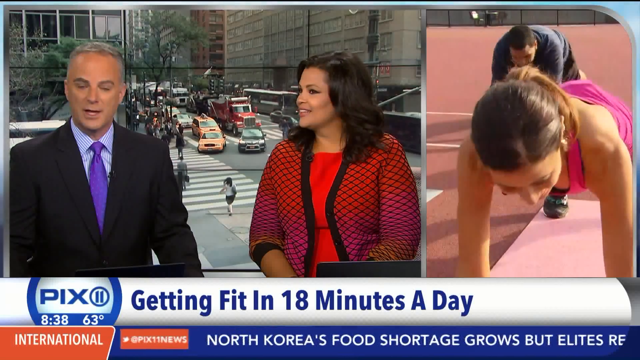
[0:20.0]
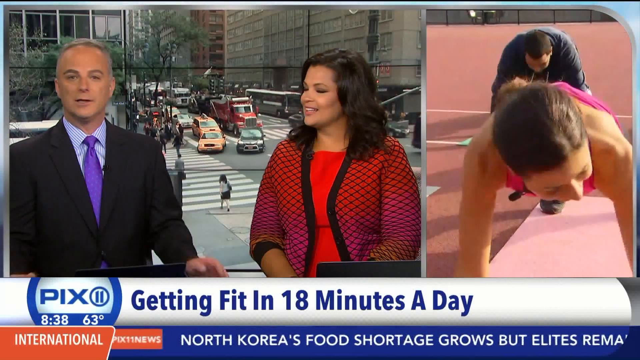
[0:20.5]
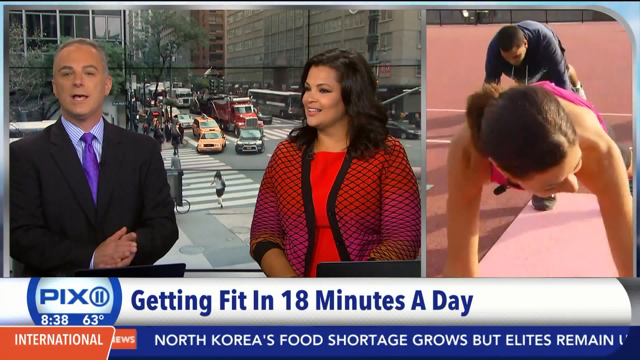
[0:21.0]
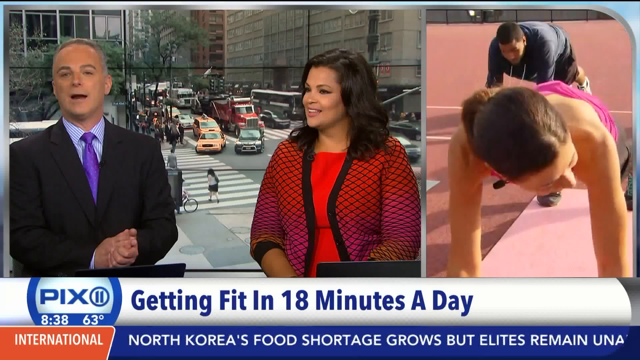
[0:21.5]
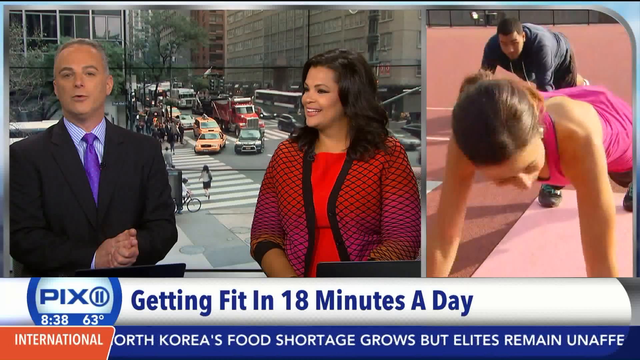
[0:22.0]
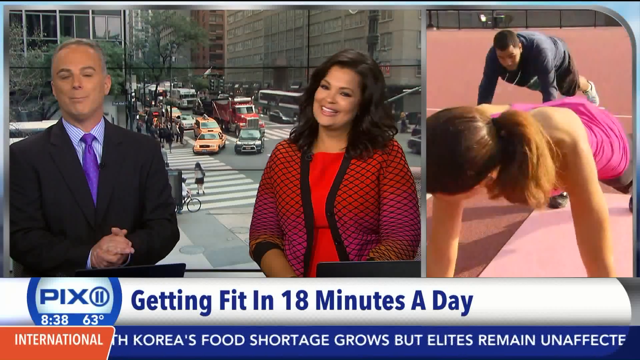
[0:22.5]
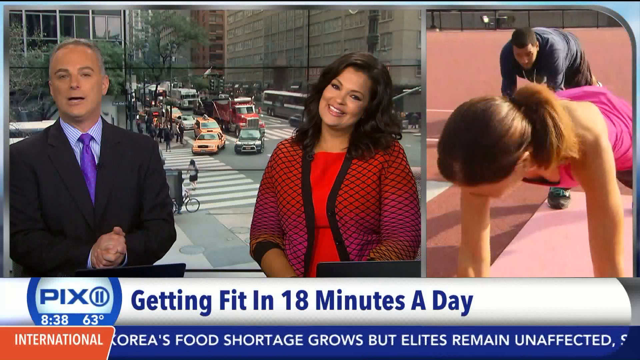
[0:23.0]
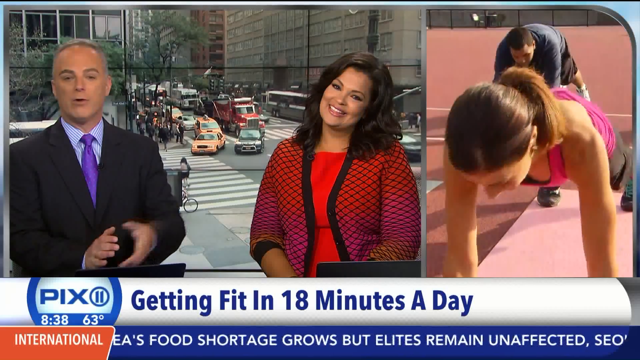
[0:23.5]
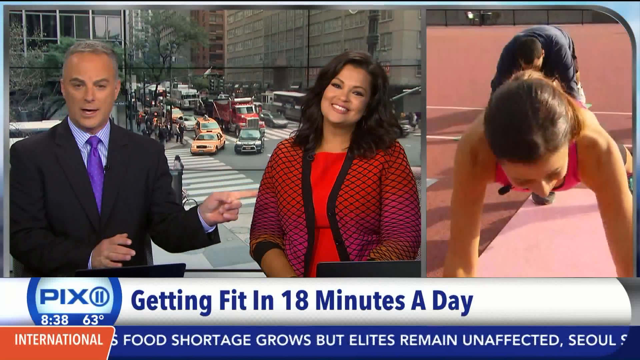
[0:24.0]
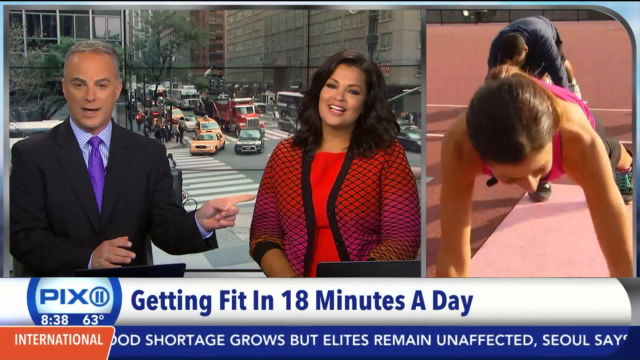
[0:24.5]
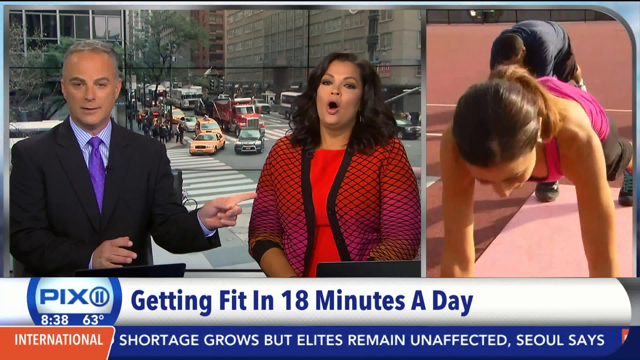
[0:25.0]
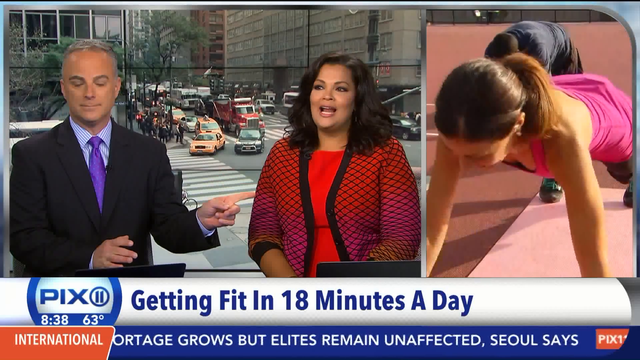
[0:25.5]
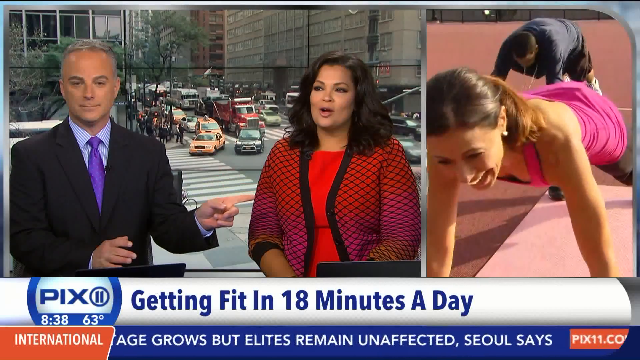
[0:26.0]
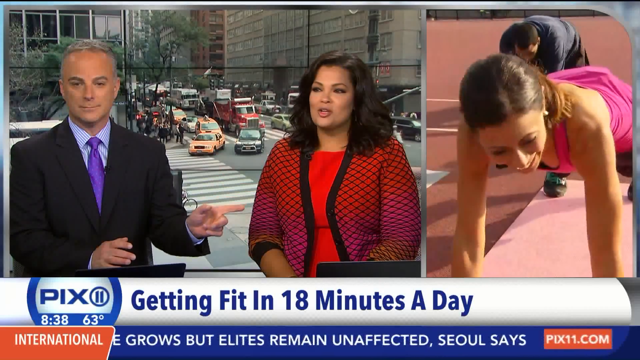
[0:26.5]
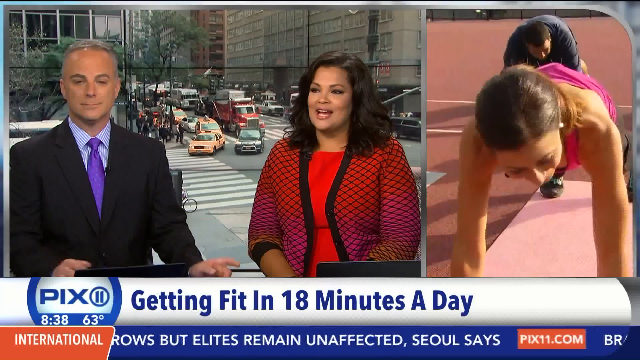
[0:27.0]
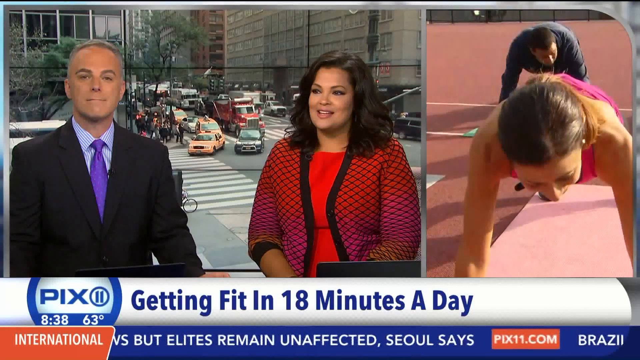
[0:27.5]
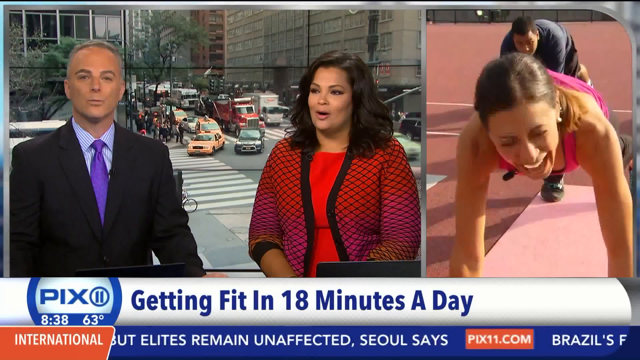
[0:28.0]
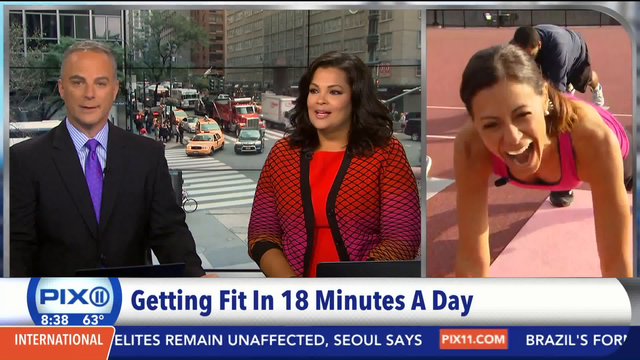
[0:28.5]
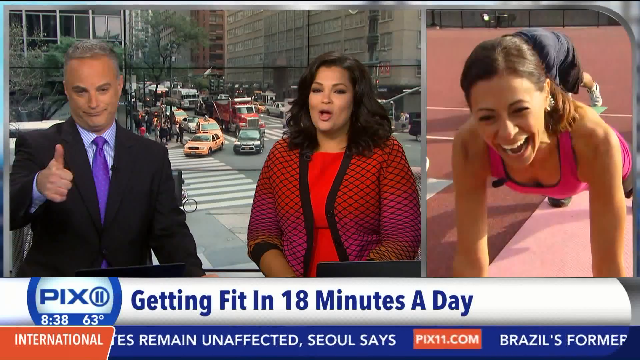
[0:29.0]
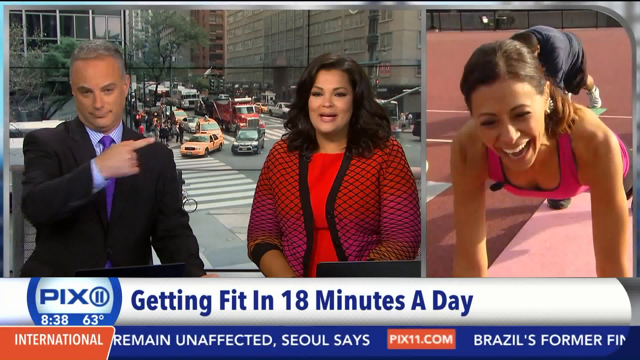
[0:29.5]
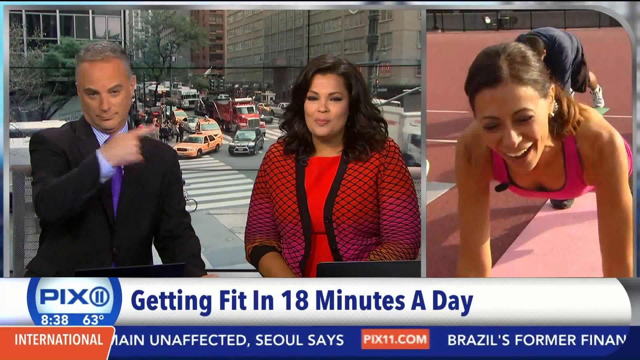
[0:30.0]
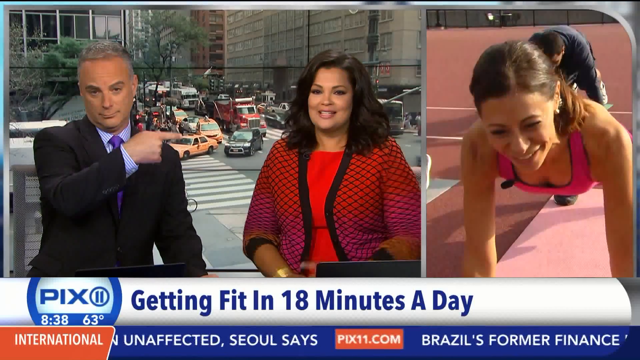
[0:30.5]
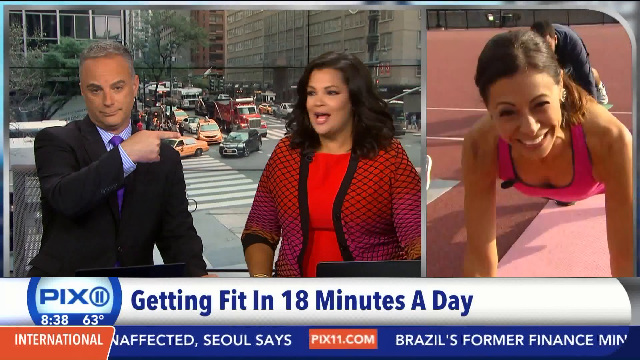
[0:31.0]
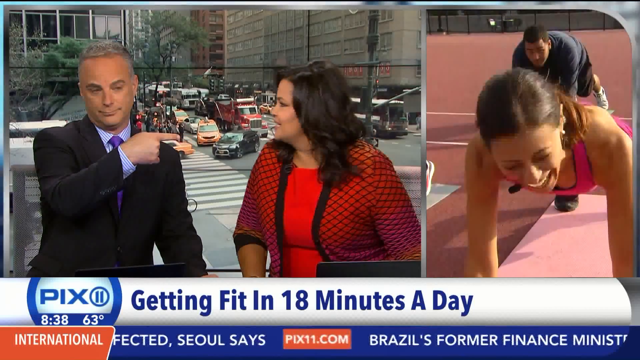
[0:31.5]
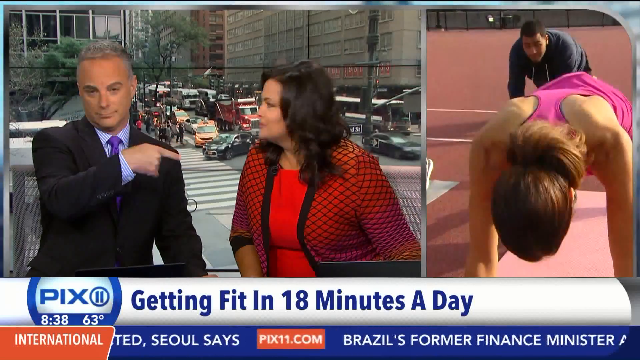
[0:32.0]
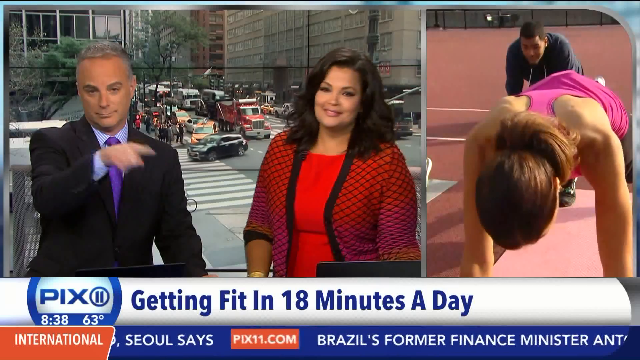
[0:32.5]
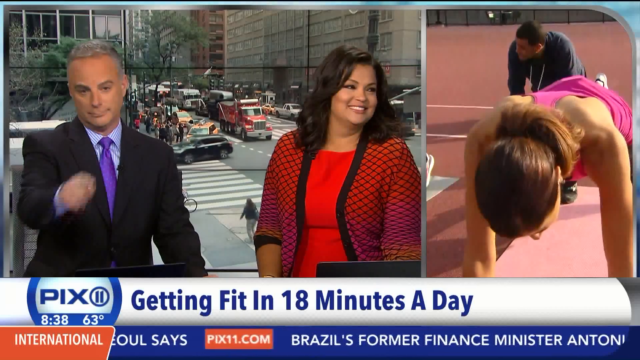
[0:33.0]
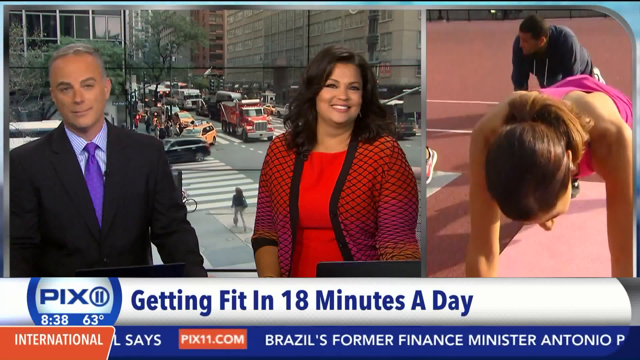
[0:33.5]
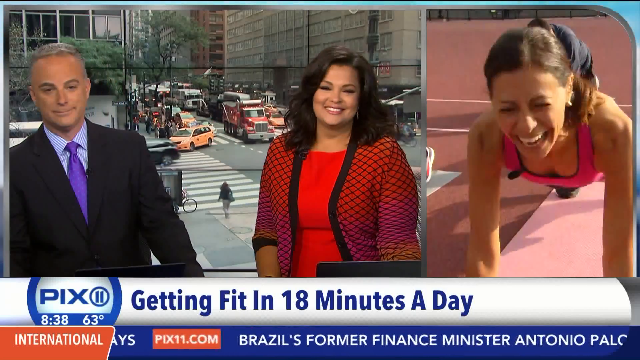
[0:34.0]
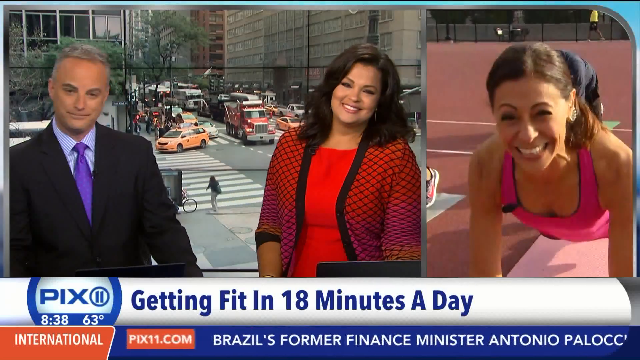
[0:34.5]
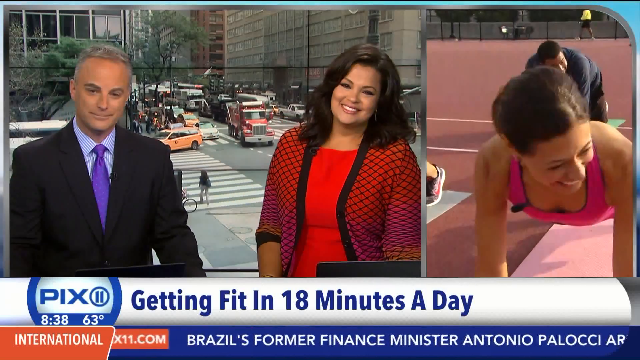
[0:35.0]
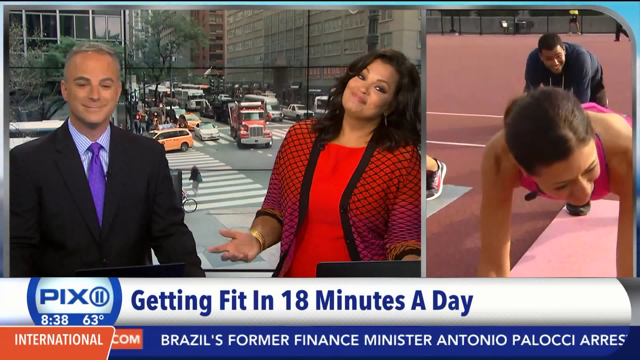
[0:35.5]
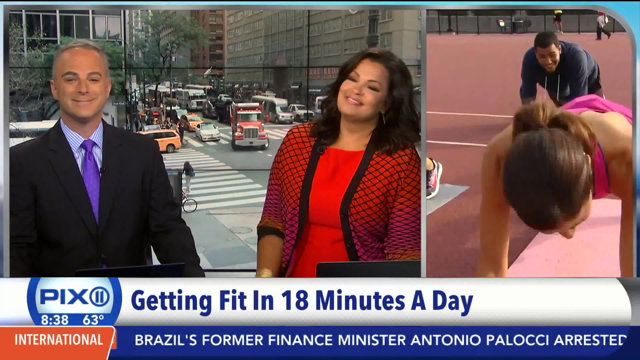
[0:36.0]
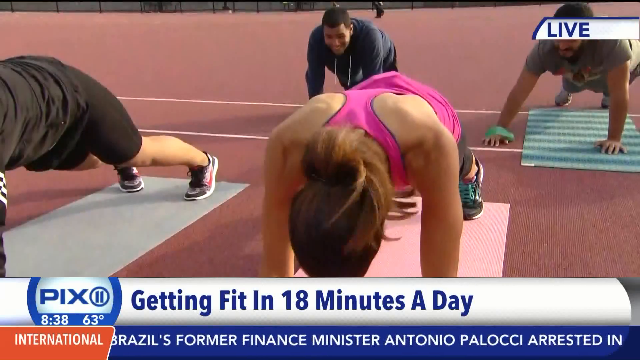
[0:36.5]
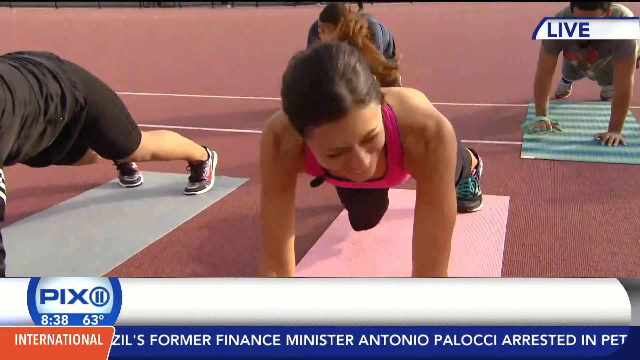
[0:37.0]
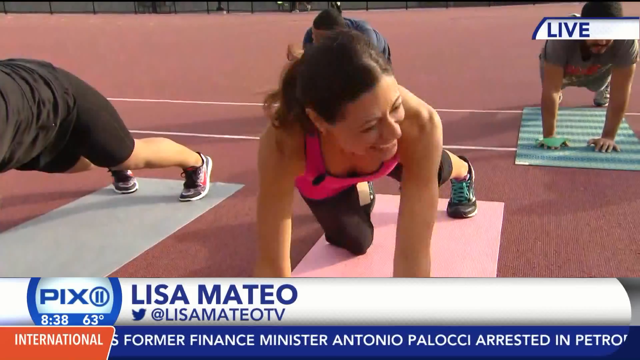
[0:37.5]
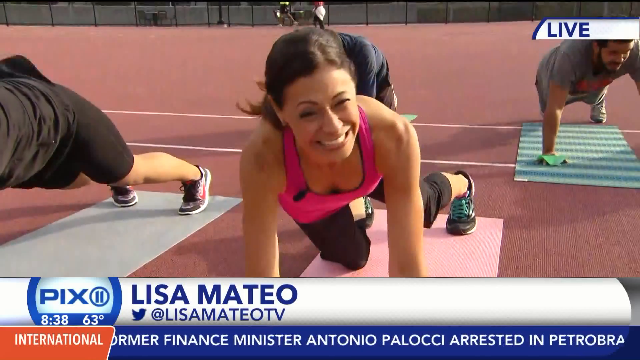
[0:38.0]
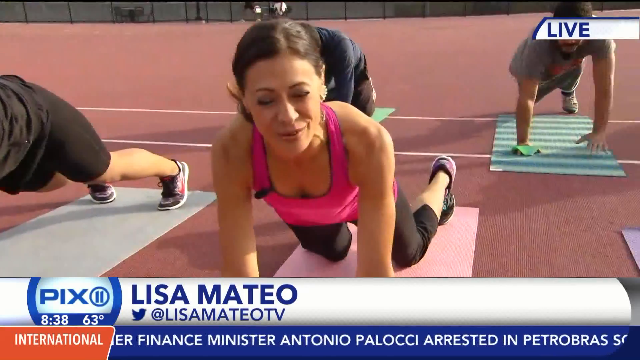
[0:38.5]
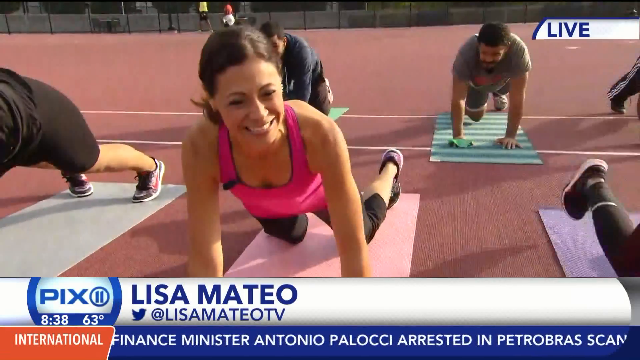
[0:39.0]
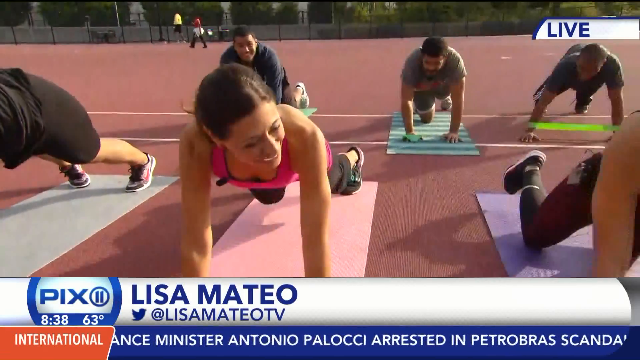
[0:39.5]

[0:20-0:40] The woman doing push-ups, the same one seen at the beginning, laughs while exercising and interacts with the two presenters in the studio, especially the man in the jacket and tie, who gestures toward her and his fellow presenter. The video then seems to move to the location of the woman doing gymnastics, named Elisa Mateo, who is exercising with other people, mainly men, on a rubber mat, presumably in a park, doing push-ups. The topic apparently concerns the link with Elisa and people doing morning exercise together around the city. The scene stays with Elisa and then goes back to the studio.